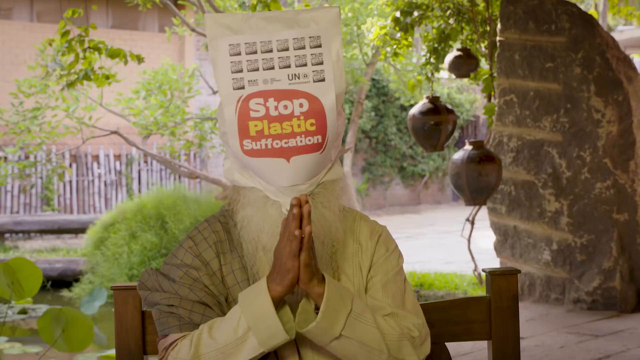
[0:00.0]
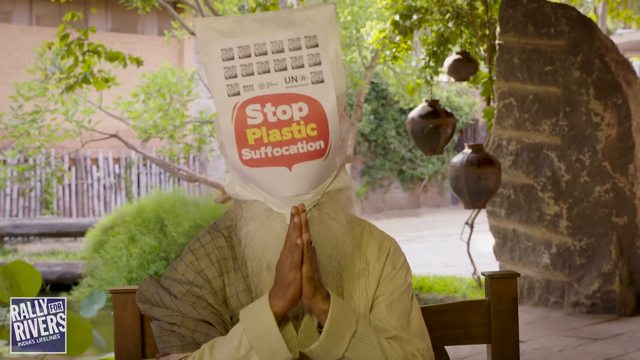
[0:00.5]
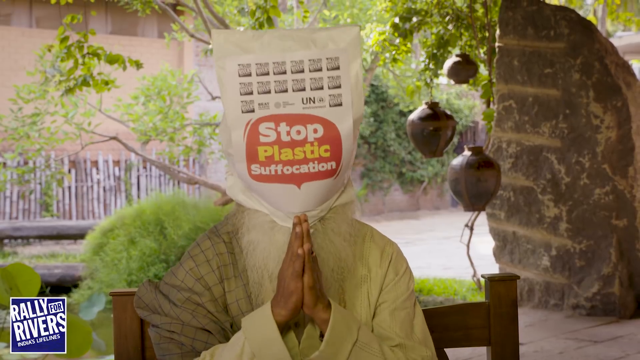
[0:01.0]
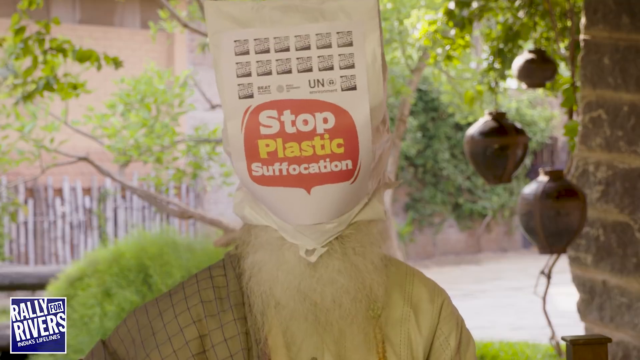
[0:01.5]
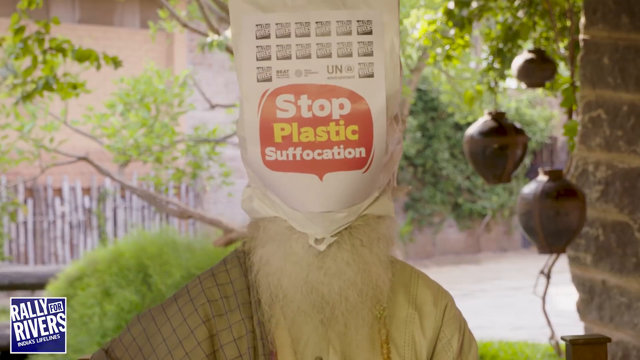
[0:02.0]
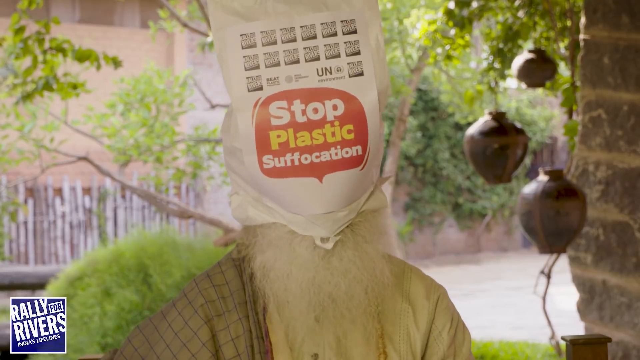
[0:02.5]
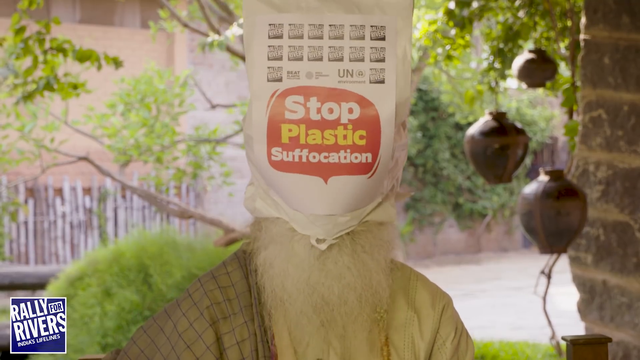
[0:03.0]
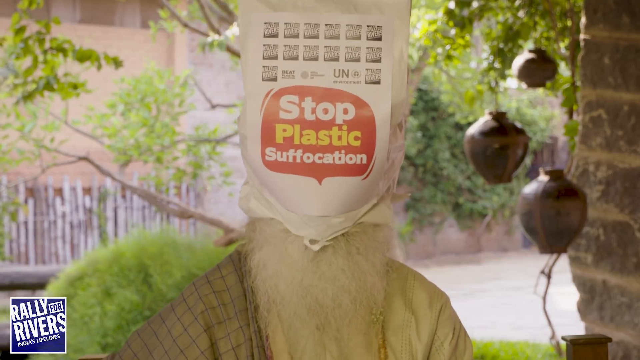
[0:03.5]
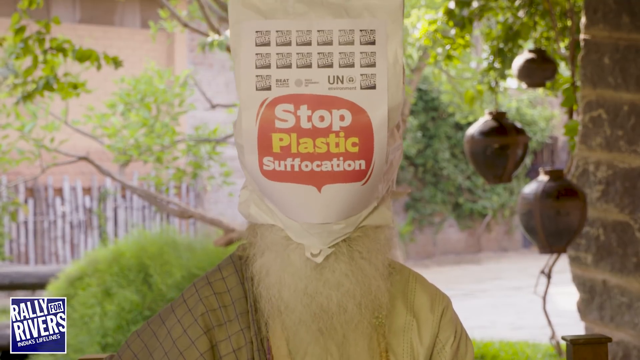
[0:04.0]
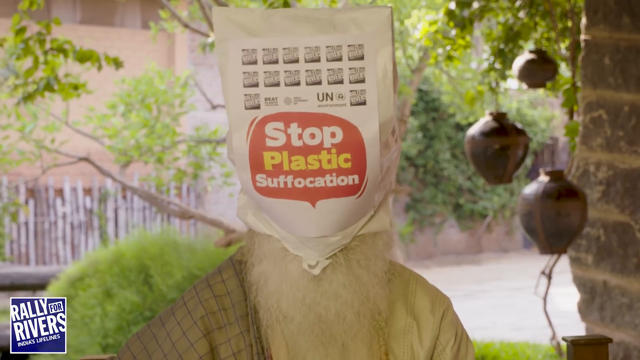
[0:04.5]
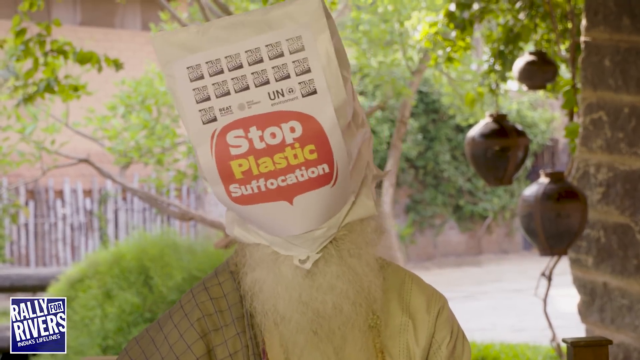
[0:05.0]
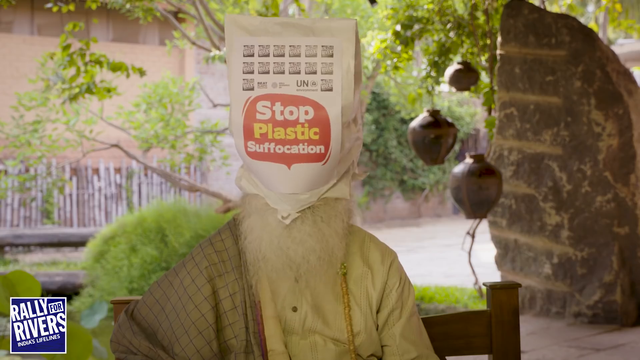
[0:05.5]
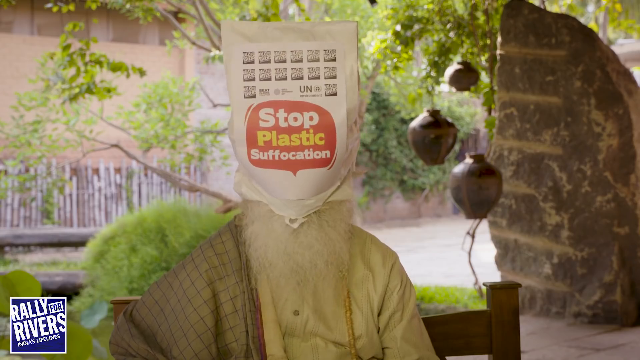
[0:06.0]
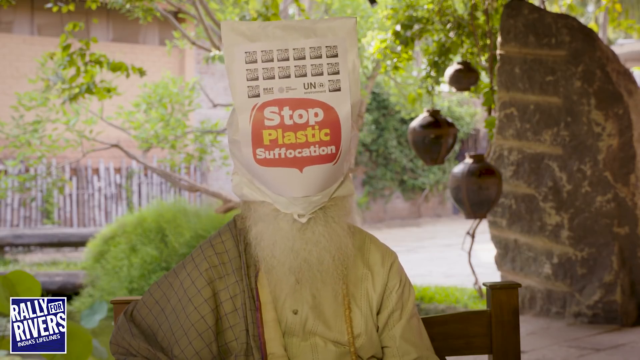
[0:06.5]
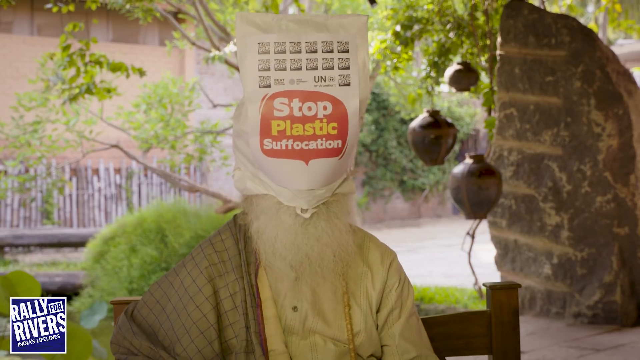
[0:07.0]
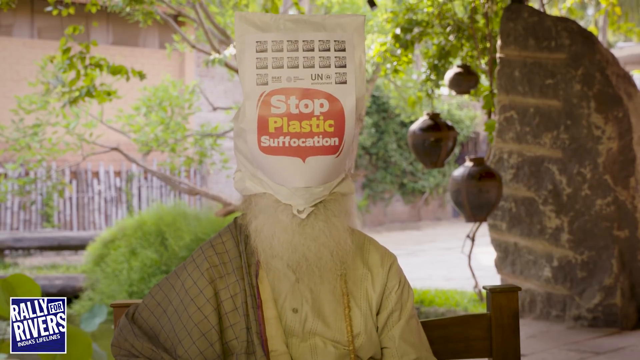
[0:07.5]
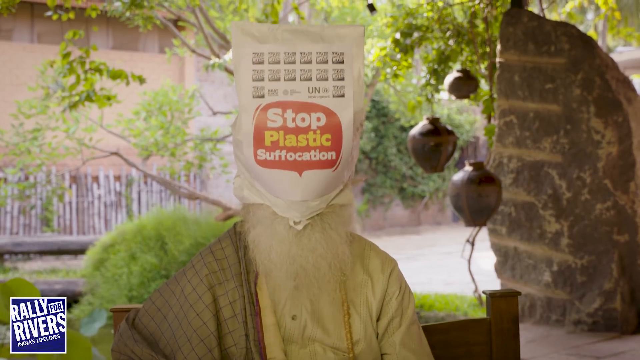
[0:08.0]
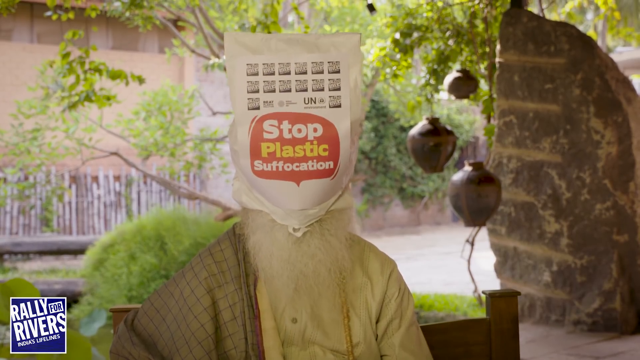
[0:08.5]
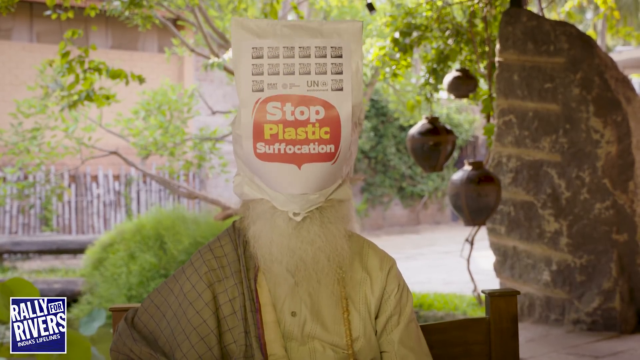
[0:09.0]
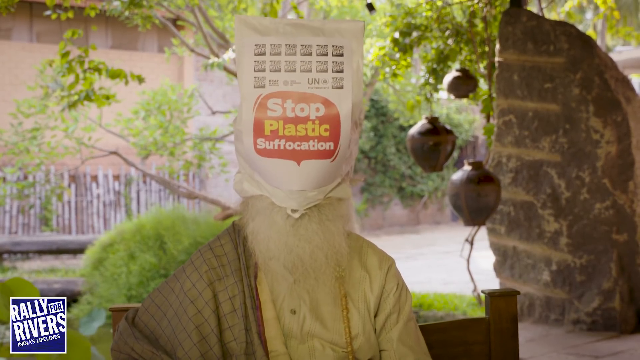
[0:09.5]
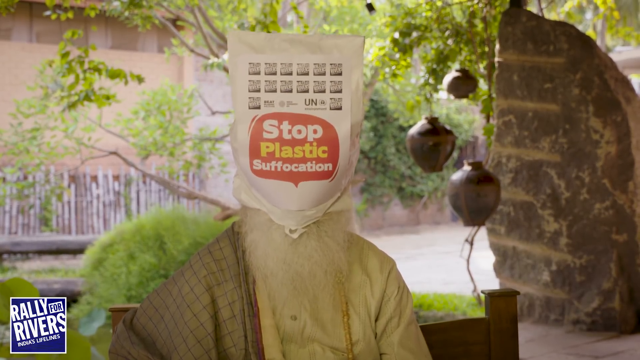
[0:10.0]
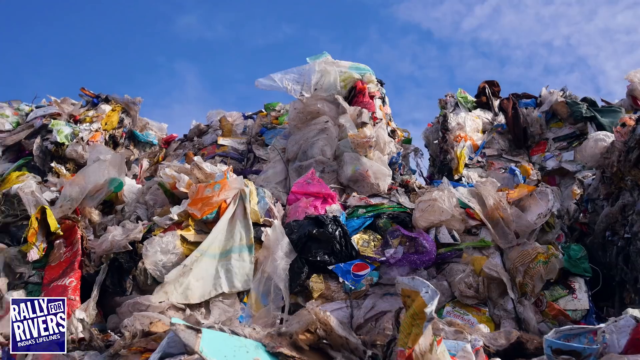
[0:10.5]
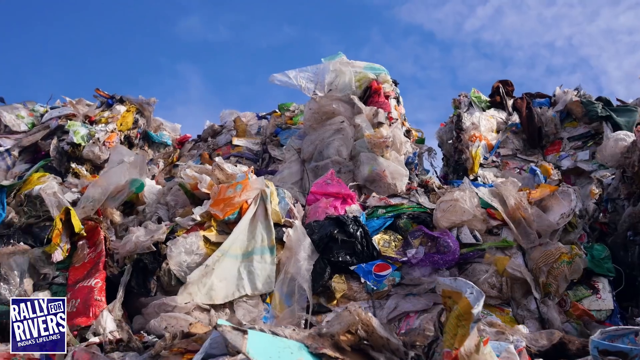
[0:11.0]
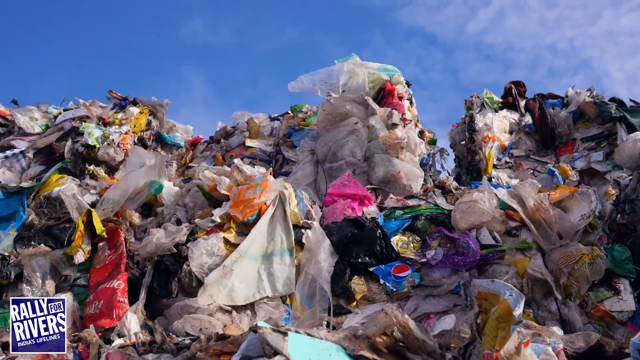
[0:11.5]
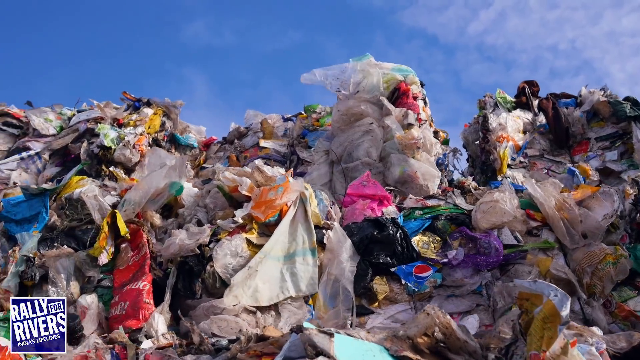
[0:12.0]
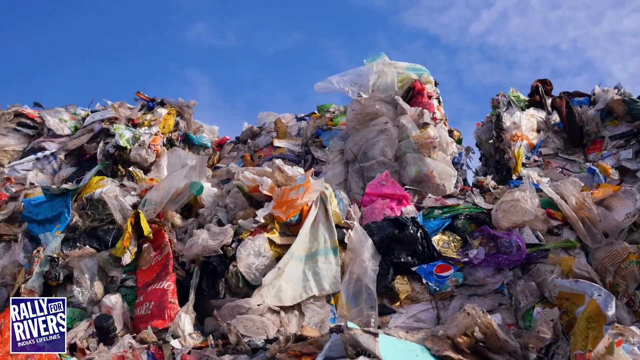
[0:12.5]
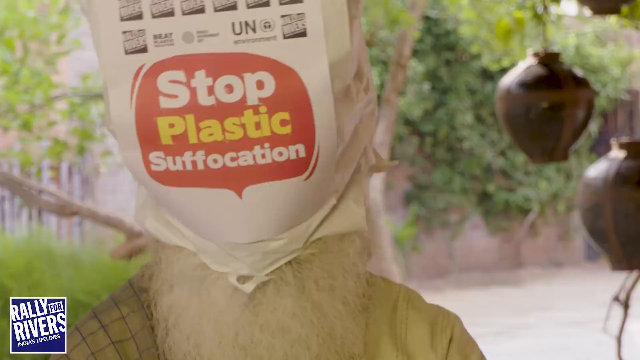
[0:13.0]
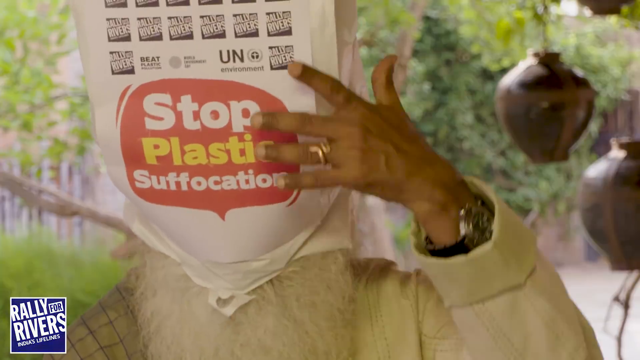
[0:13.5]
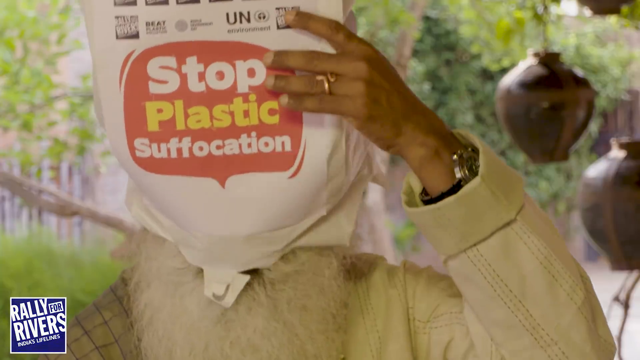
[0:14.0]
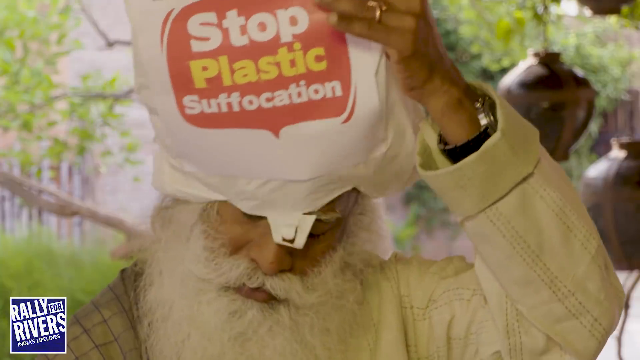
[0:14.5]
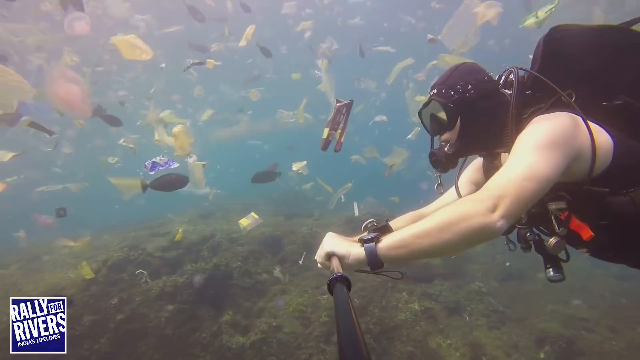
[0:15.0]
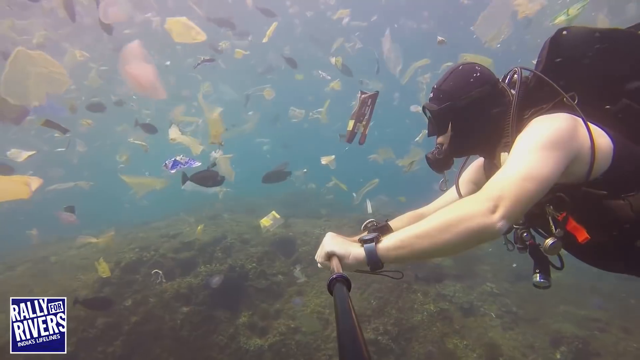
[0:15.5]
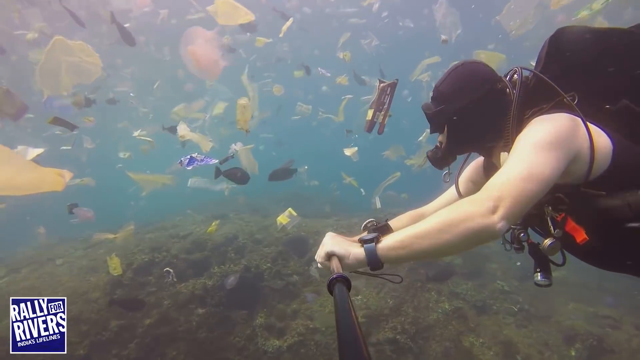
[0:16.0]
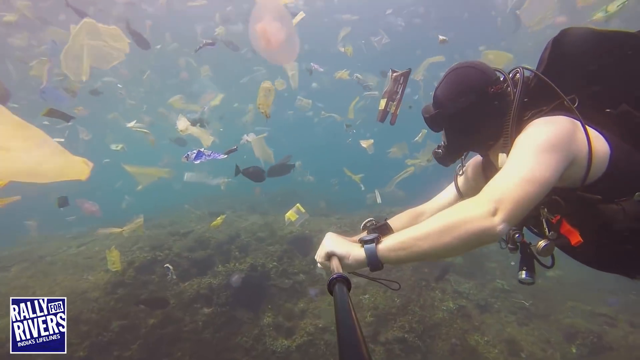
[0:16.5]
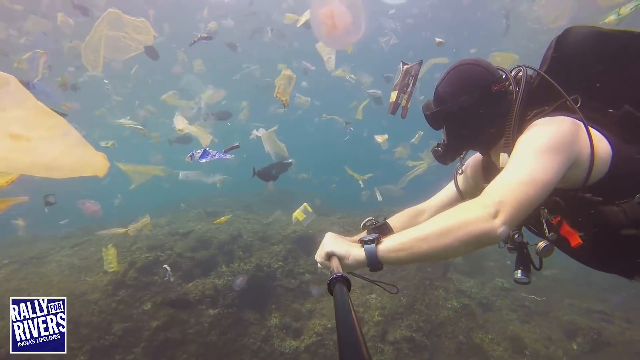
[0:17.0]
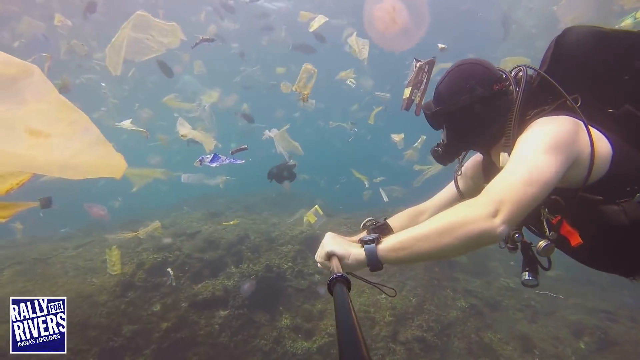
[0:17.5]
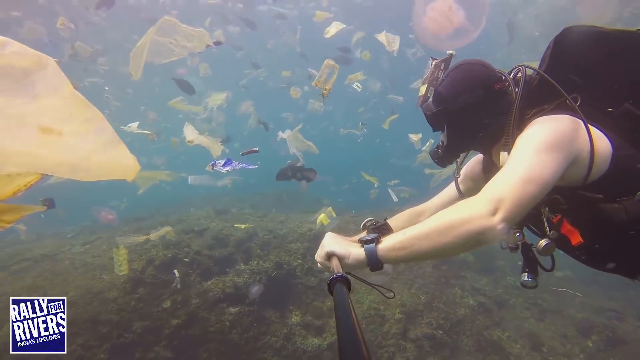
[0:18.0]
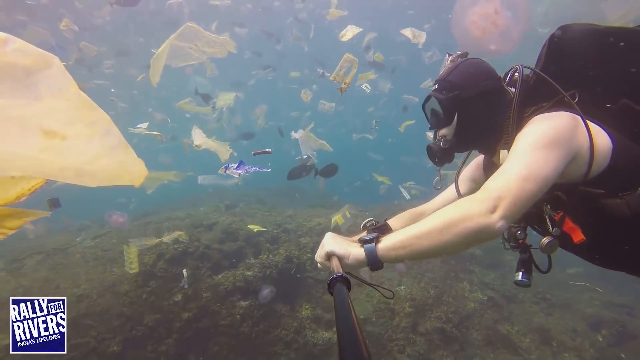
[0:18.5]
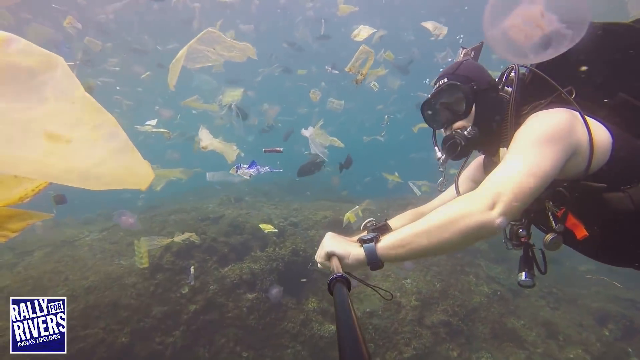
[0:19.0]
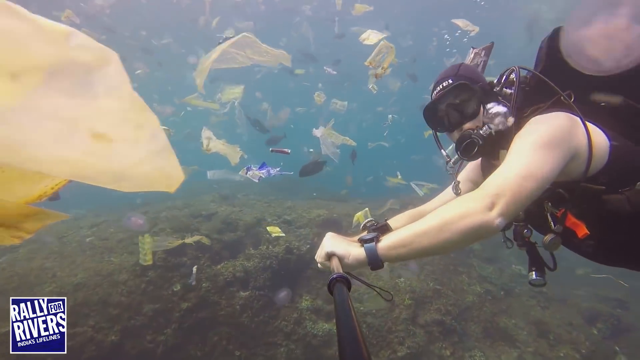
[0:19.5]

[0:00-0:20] The video appears to be some sort of comedy sketch or protest. A man with a long beard, possibly in a costume, is wearing a bag over his head; the bag has a red comment balloon on it that reads "stop plastic suffocation." The video moves to a picture of a lot of litter and trash, including a lot of plastic. It then cuts to a scuba diver in water filled with litter, plastic and debris.